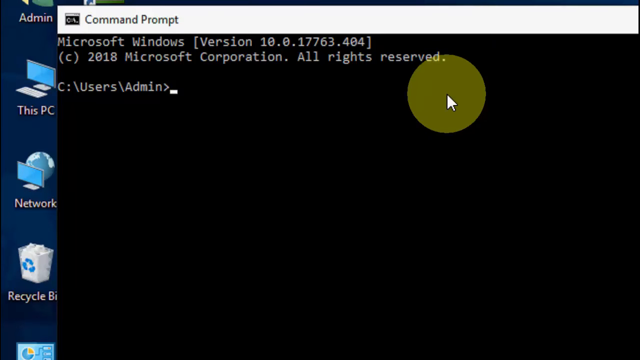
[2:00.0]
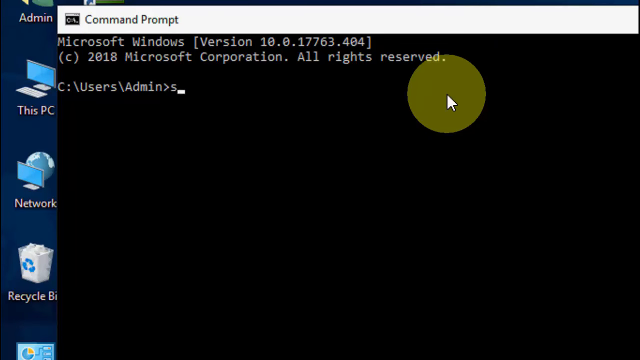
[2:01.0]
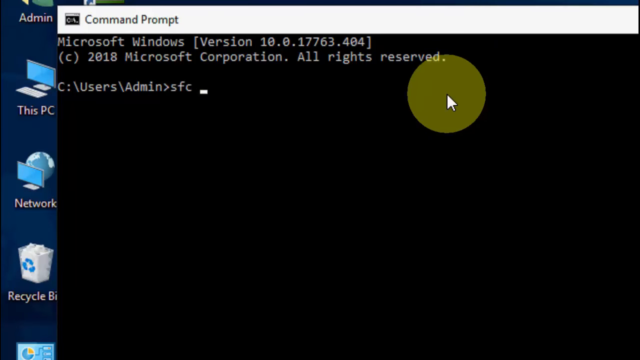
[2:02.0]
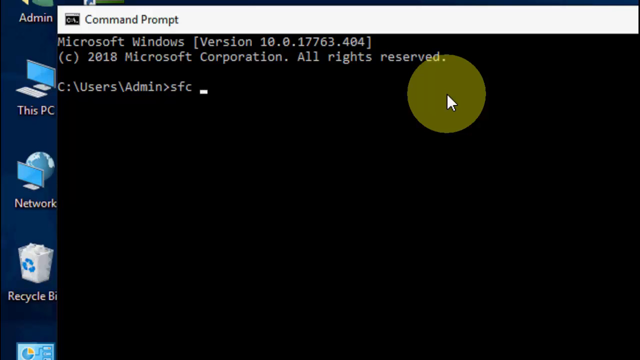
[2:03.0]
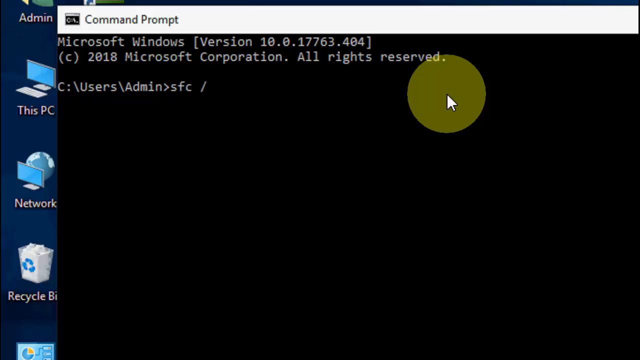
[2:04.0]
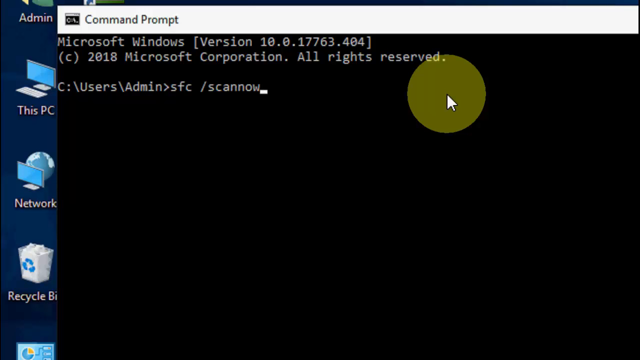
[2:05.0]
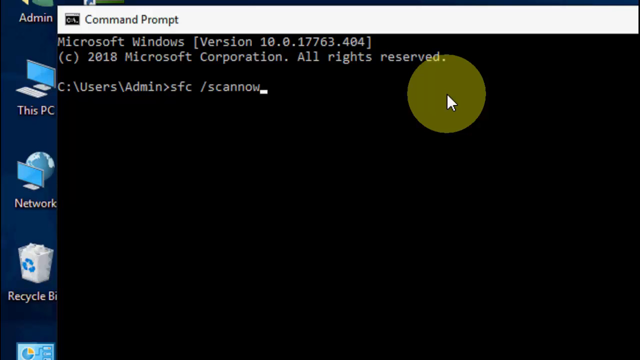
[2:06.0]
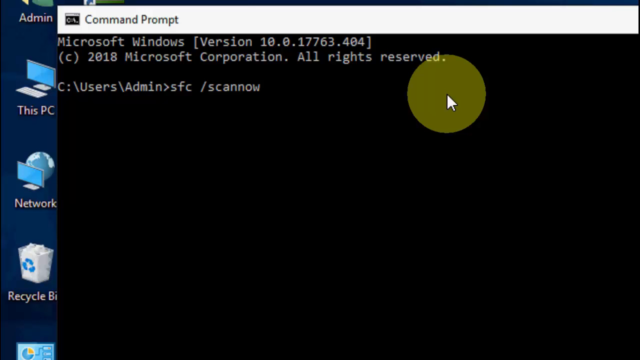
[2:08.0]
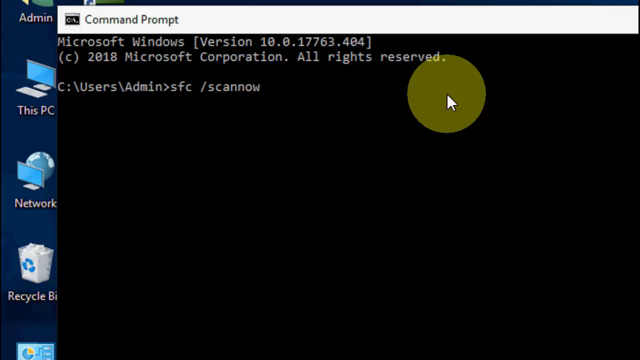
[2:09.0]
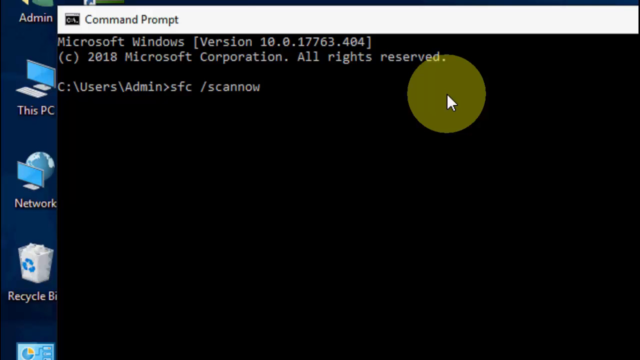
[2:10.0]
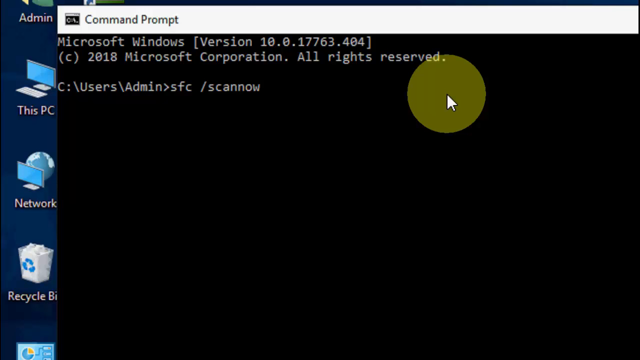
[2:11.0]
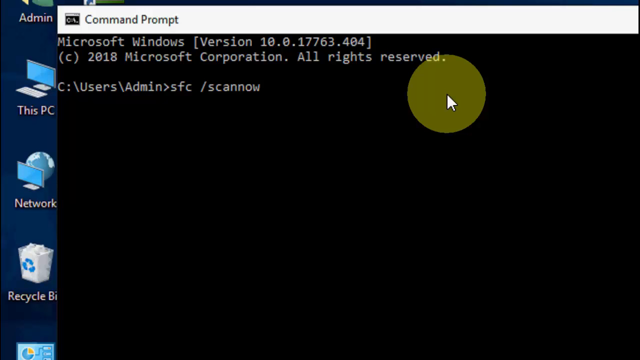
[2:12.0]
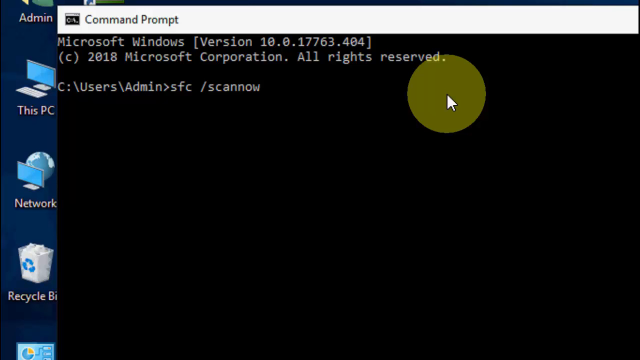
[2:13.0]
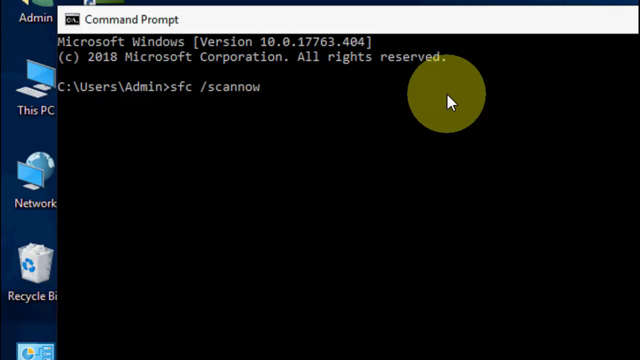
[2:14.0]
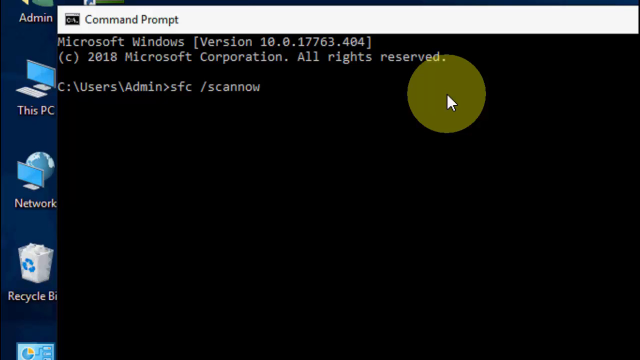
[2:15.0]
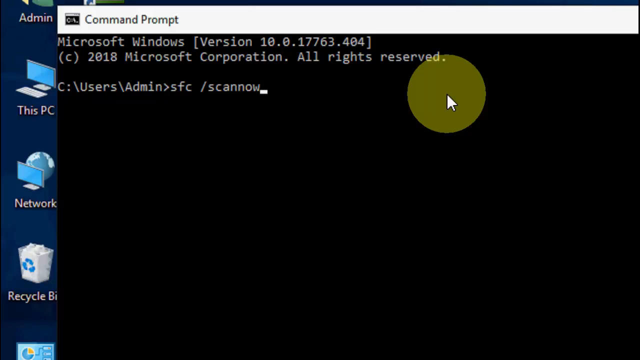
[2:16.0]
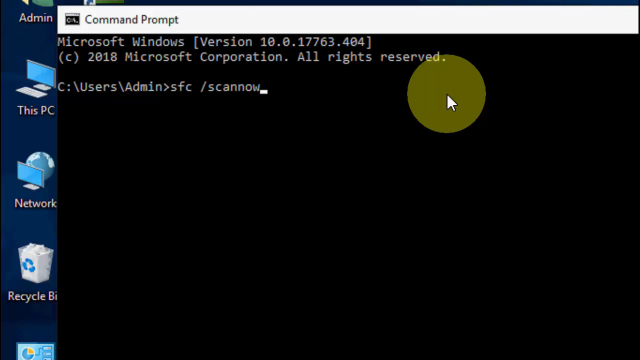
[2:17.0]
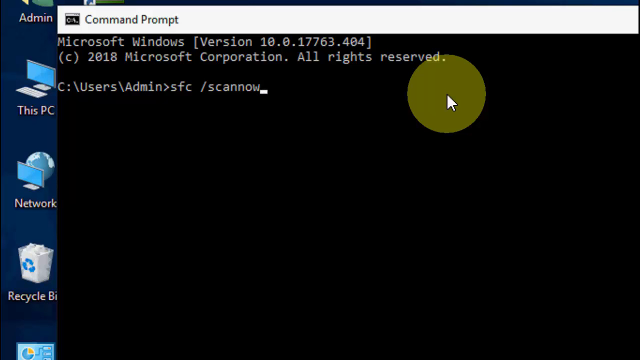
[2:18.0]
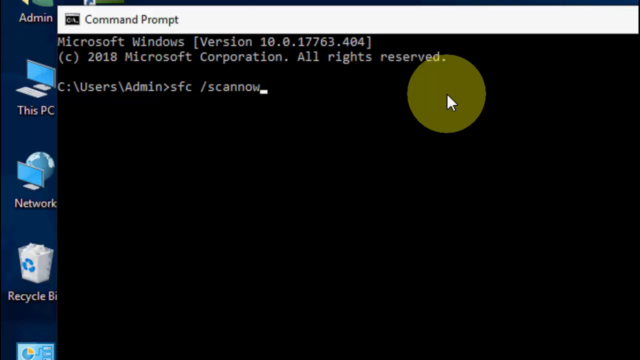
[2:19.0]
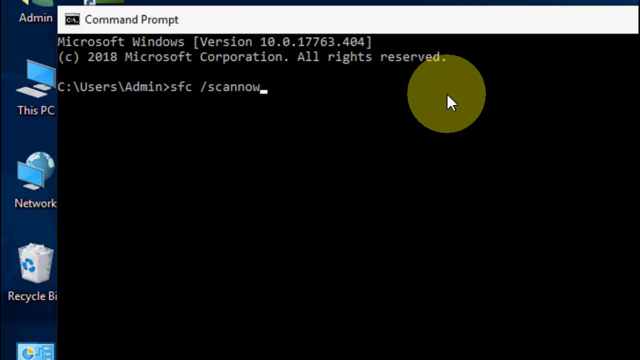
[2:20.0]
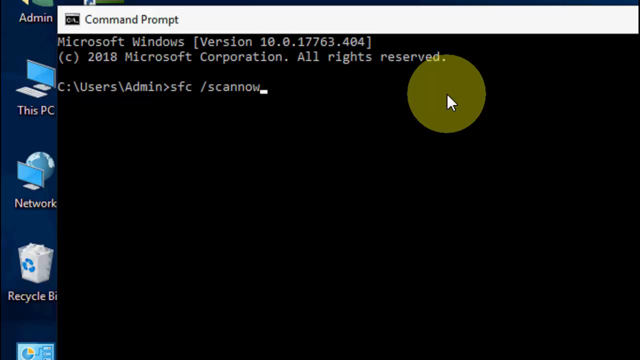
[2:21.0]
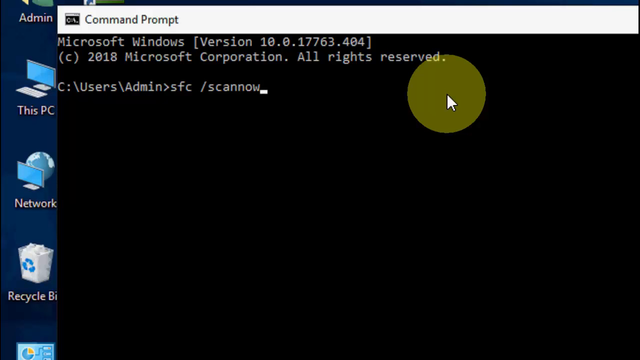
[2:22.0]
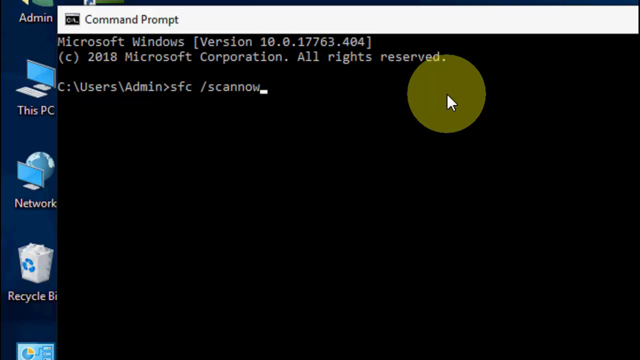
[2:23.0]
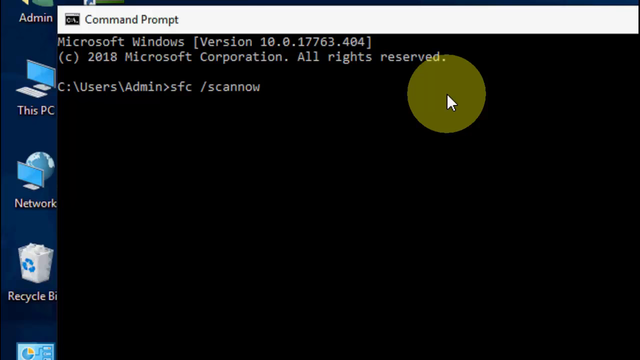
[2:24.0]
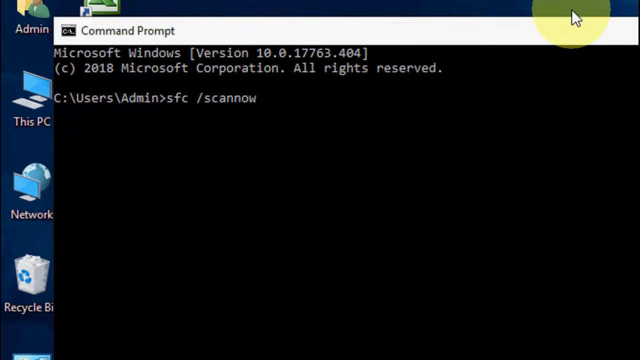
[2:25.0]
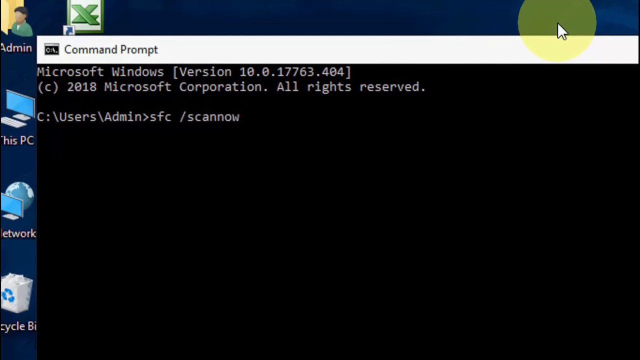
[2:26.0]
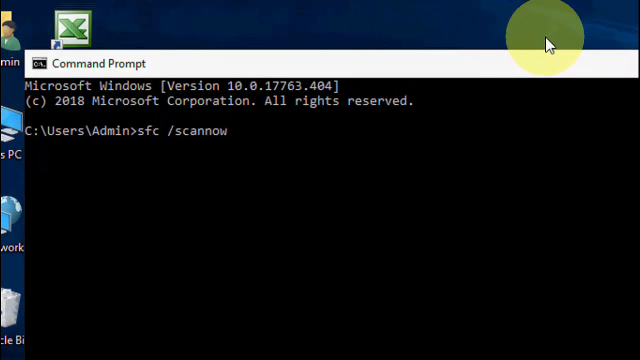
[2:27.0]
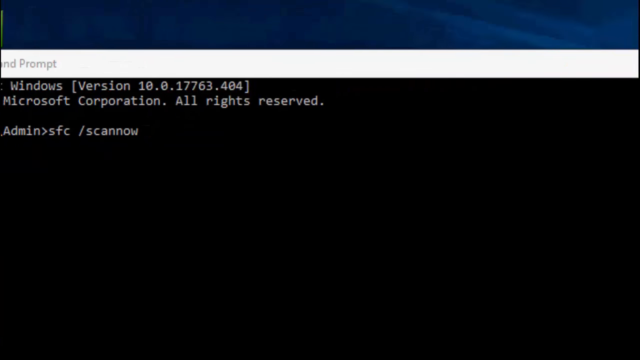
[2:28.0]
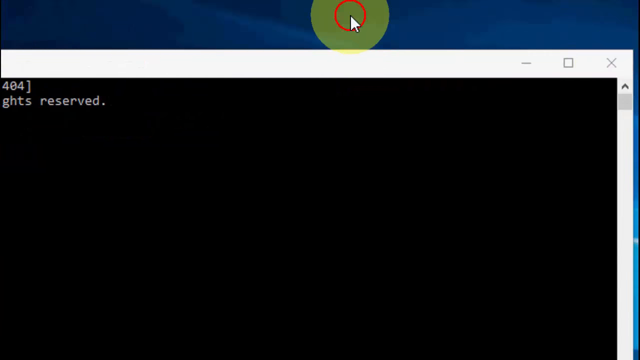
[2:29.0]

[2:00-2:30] A close-up shows the Command Prompt box on the desktop of a Windows PC, with shortcuts for This PC, Network and Recycle Bin visible. A cursor with a circle around it is within the black section of the Command Prompt box. There is also a blinking cursor, and code is written by the Command Prompt as it moves from left to right across the black area. It appears to have written code for users backslash admin and scan now on the C drive. The blinking cursor then stays there with no more code being written. The person moves the cursor all the way up to just above the command prompt pop-up and clicks, and the circle around the cursor blinks a red ring. The cursor then moves to the right, right above the close square.